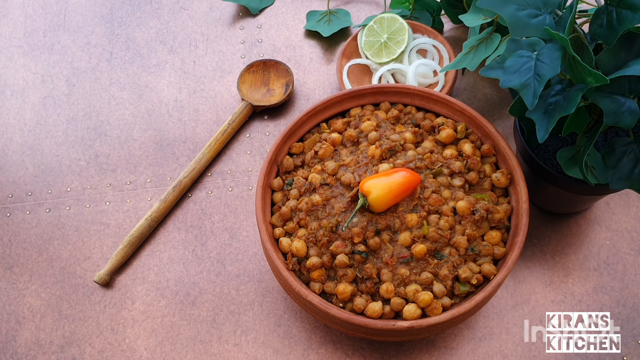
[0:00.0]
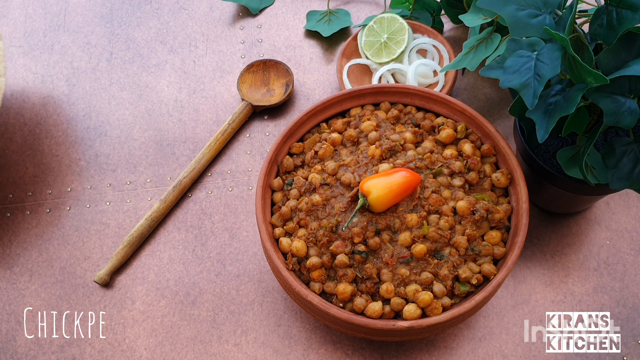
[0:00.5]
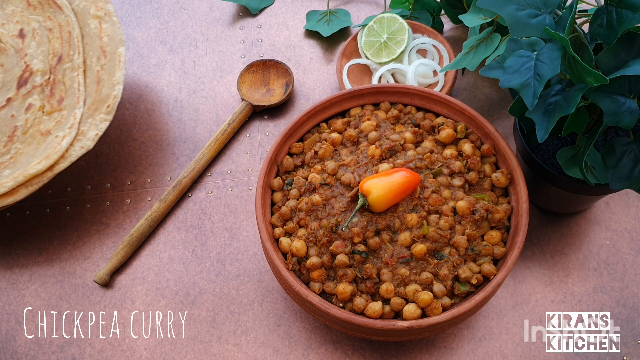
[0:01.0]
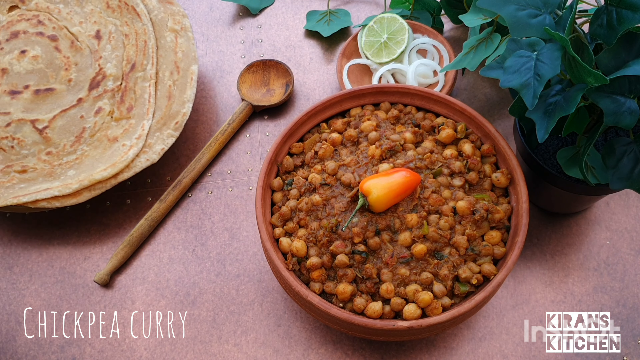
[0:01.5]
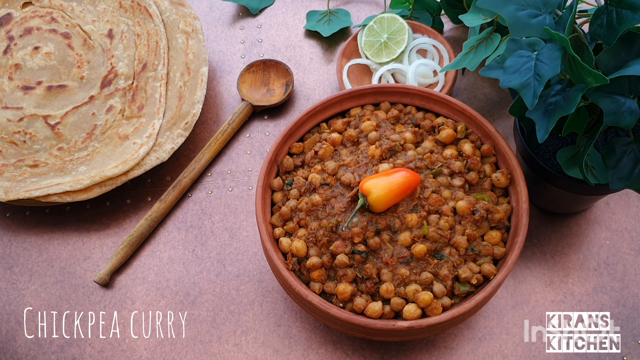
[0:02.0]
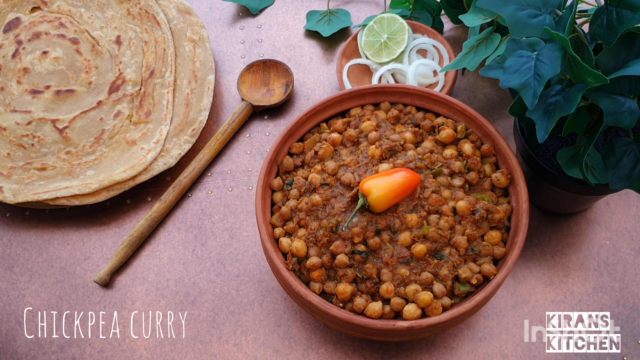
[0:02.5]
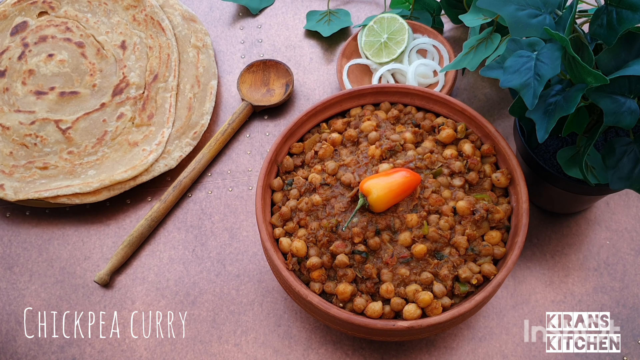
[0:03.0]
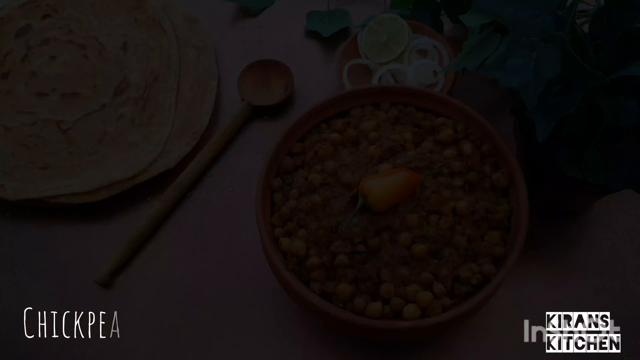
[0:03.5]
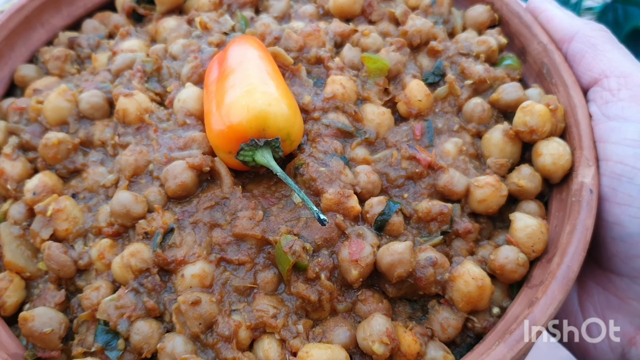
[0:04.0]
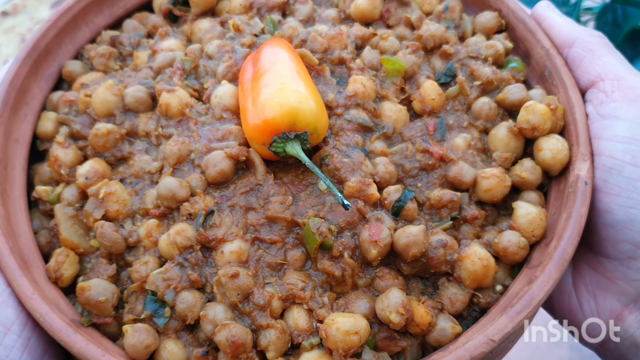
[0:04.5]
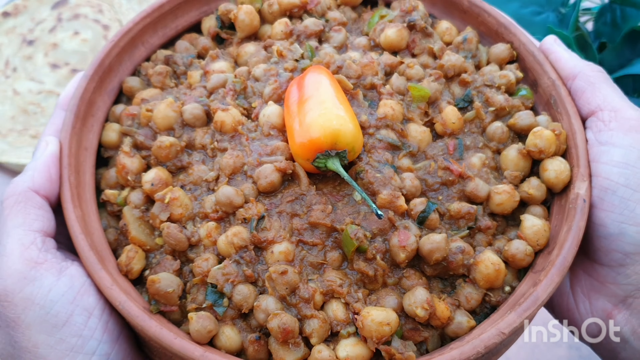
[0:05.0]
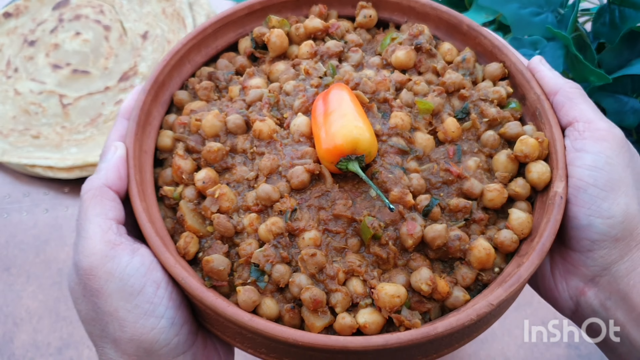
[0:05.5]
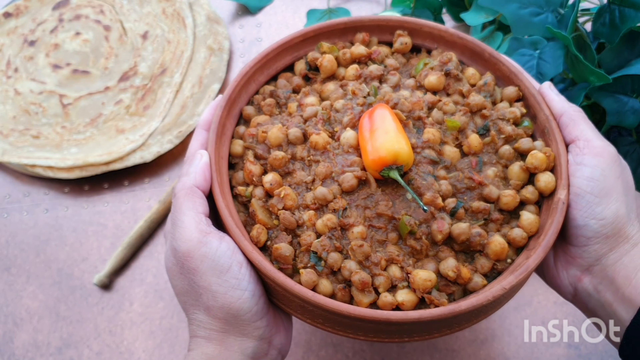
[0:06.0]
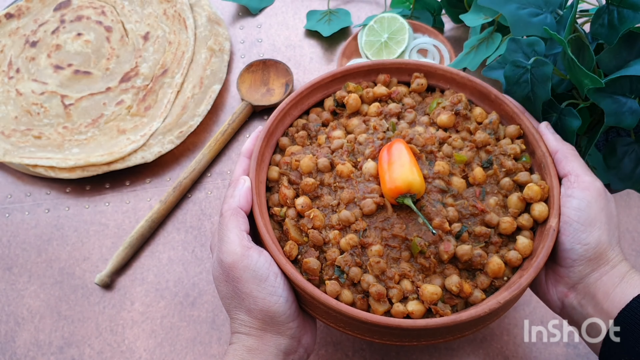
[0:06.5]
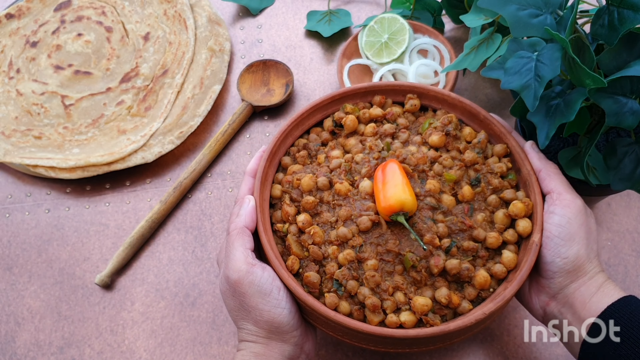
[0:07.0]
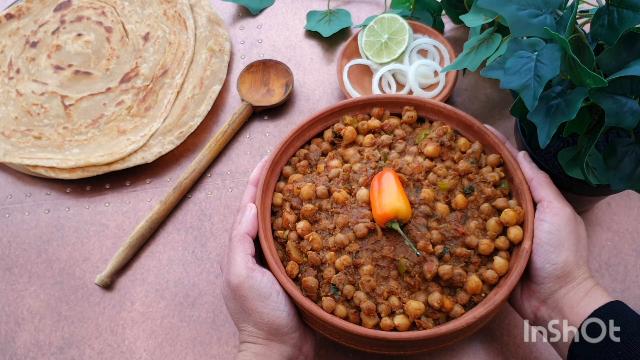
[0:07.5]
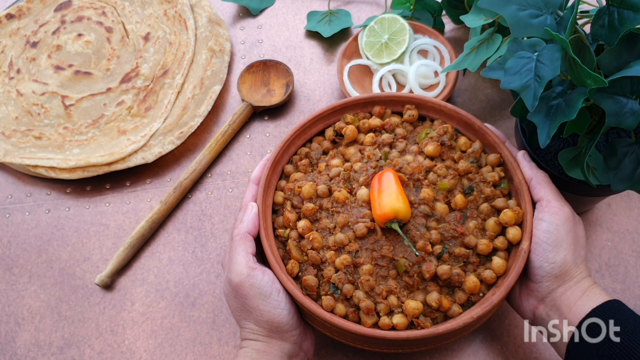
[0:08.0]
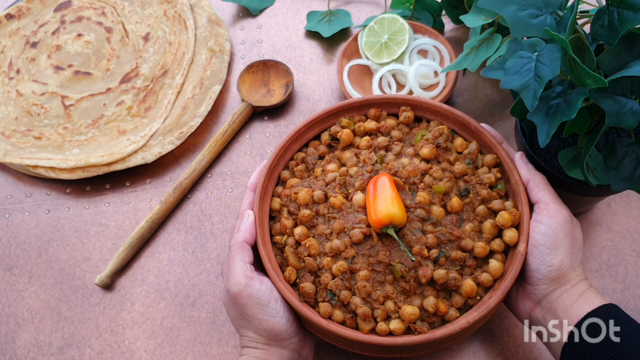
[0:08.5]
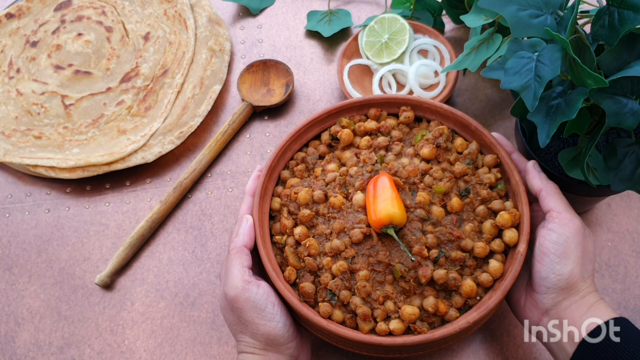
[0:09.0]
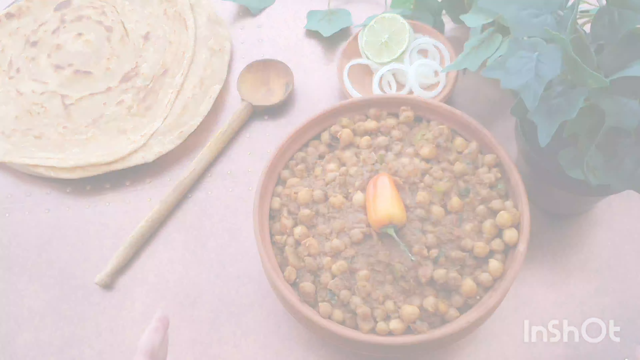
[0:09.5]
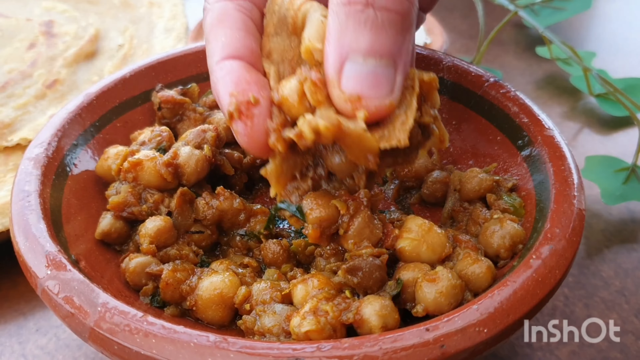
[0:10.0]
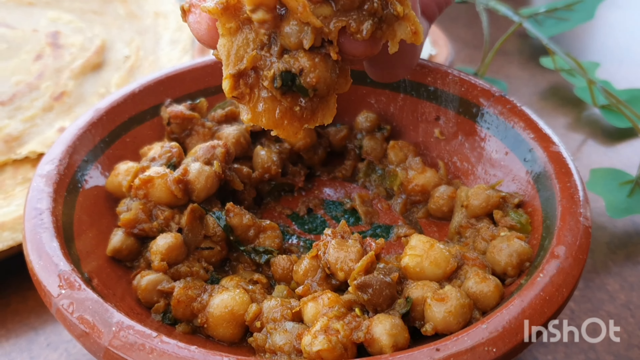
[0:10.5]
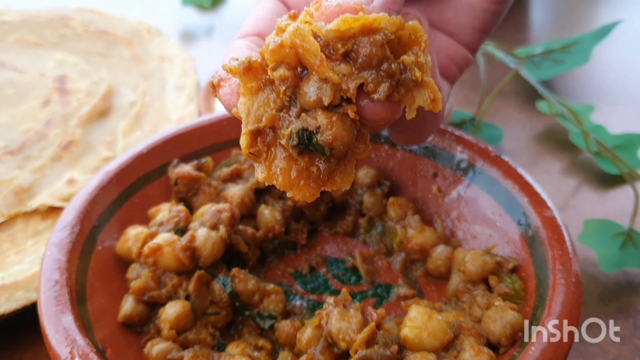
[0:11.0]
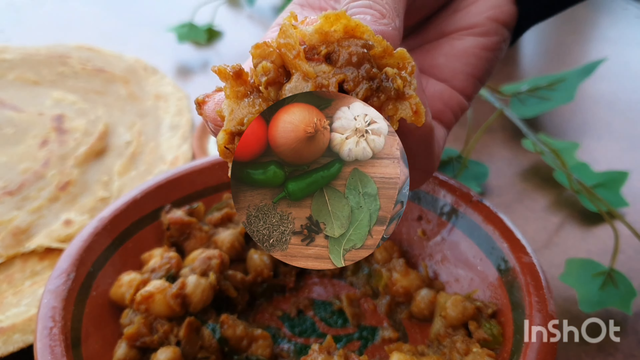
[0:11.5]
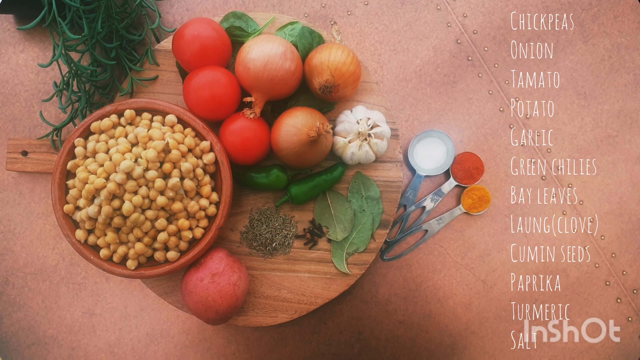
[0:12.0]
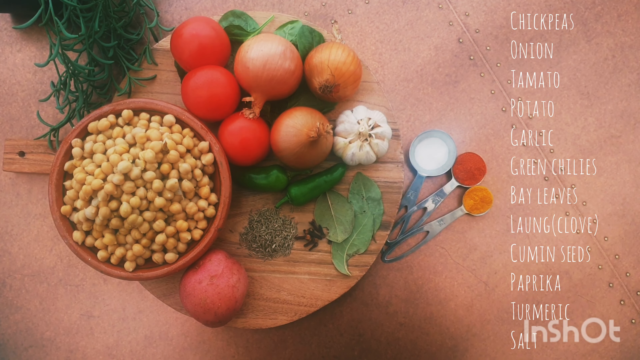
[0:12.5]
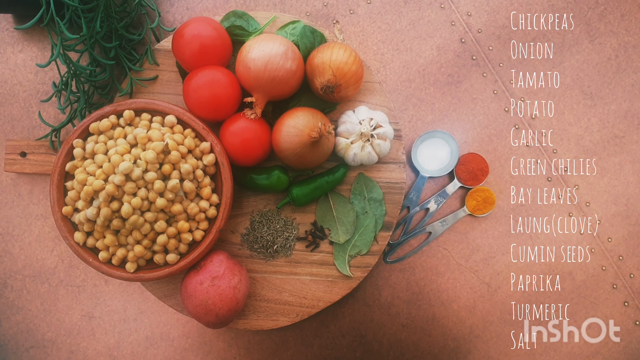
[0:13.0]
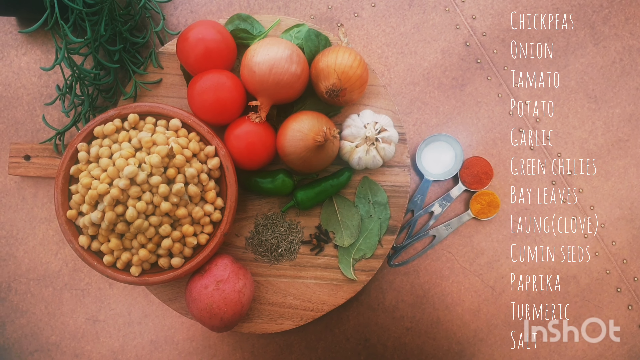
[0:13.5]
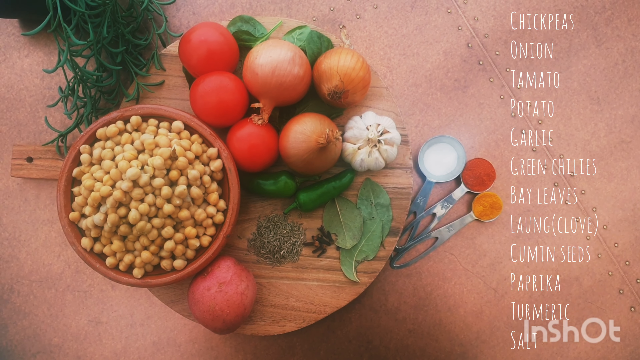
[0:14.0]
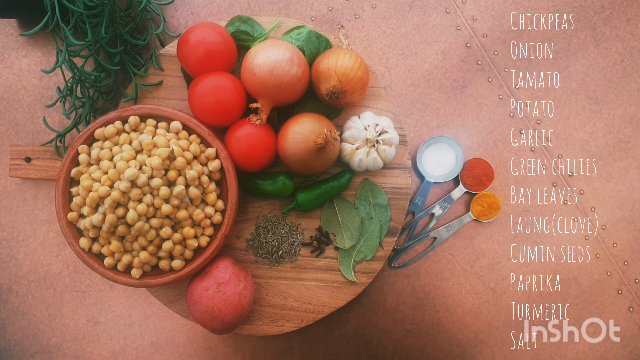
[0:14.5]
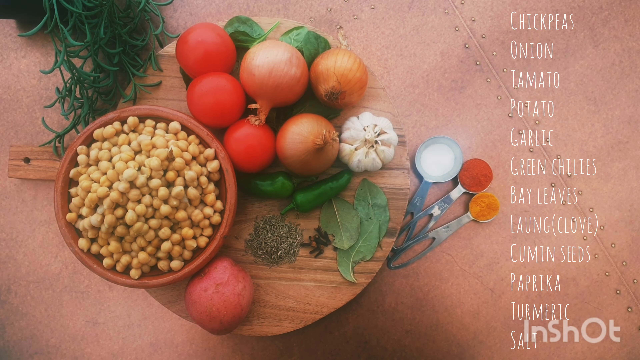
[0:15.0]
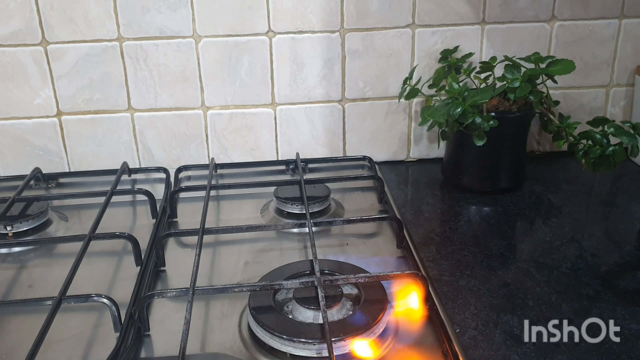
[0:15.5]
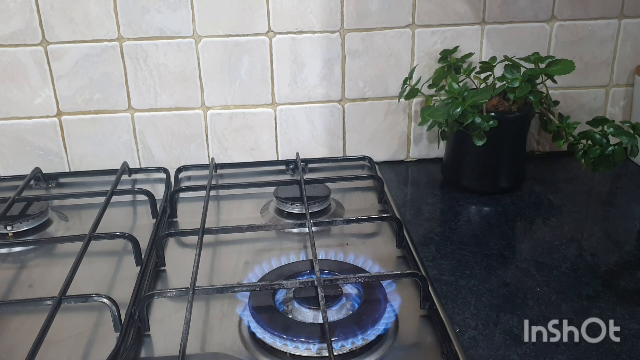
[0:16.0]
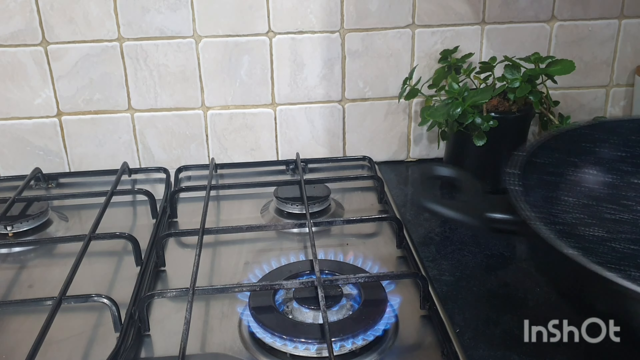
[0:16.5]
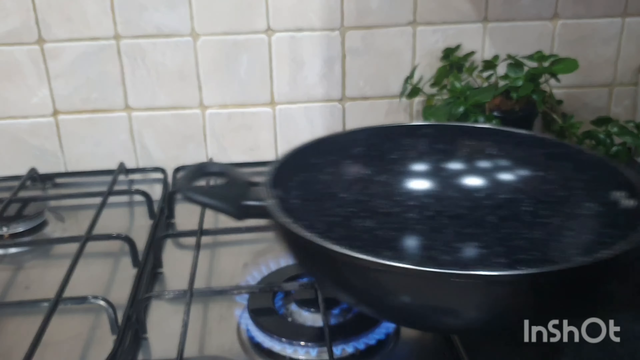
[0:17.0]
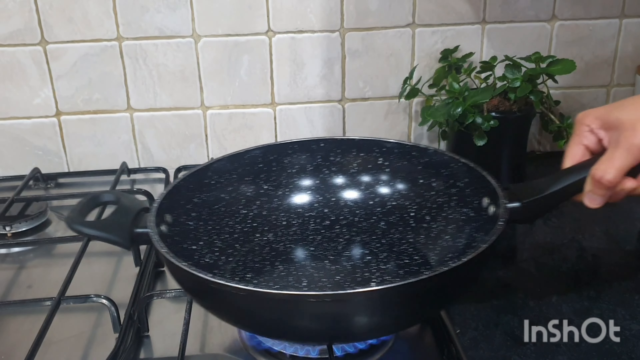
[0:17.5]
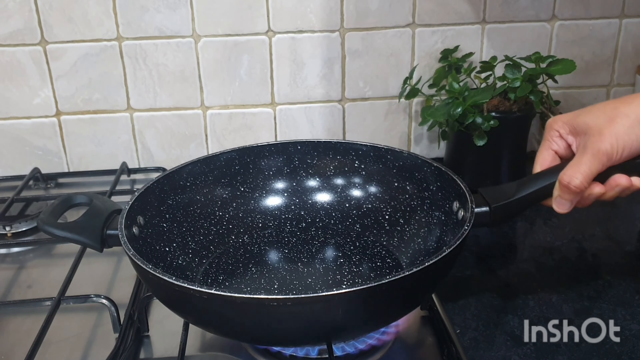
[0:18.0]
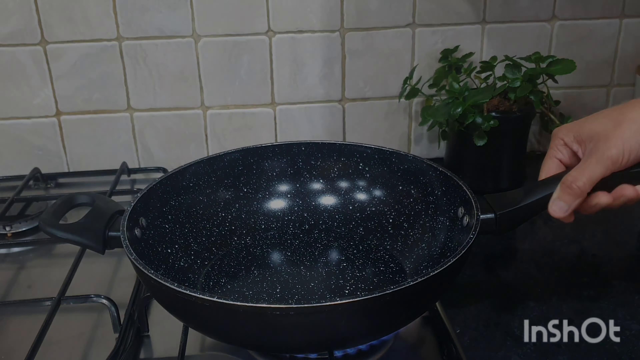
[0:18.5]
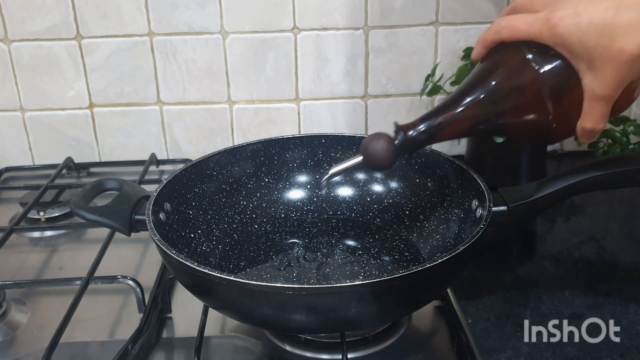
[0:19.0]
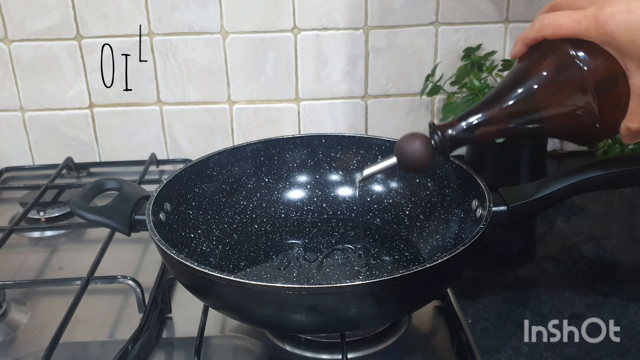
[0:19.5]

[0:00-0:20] A dish of chickpeas appears to be made into some sort of meal on a gas stove. It begins with a dish of chickpeas with a small pepper in the middle of it, and the view moves across as the dish is put very delicately on the table. Something is taken out by hand. A black frying pan, which looks like it has an enameled surface, is put onto the hob, and a small quantity of oil is drizzled in. Tortilla wraps are next to it, and there are onions to go with it. A single hand takes things in and out of the bowl and puts the pan onto the stove.